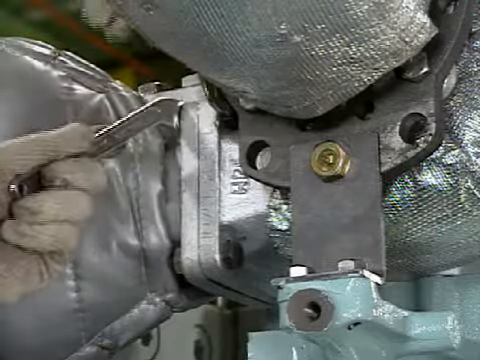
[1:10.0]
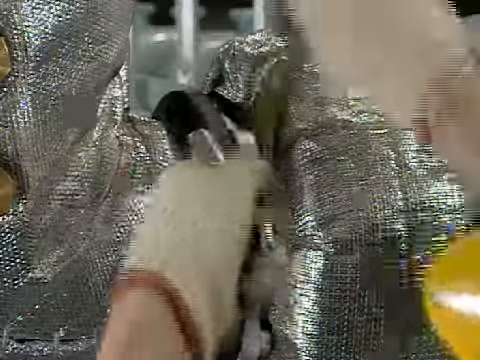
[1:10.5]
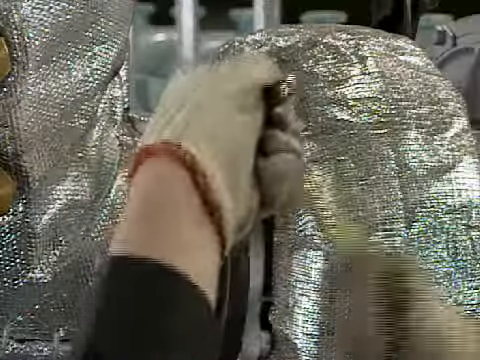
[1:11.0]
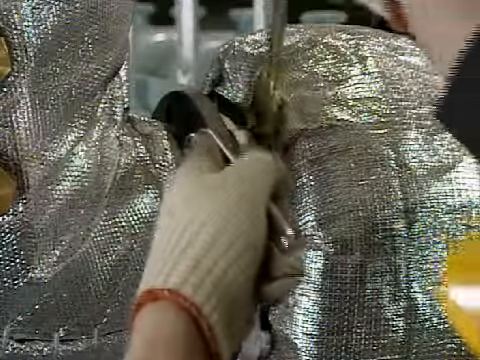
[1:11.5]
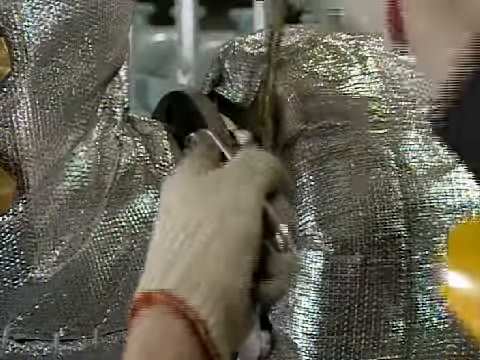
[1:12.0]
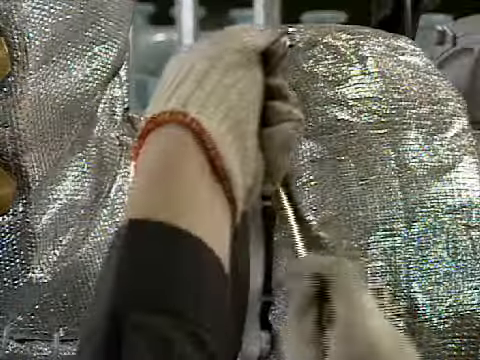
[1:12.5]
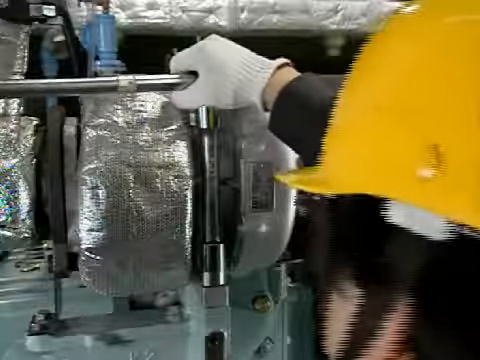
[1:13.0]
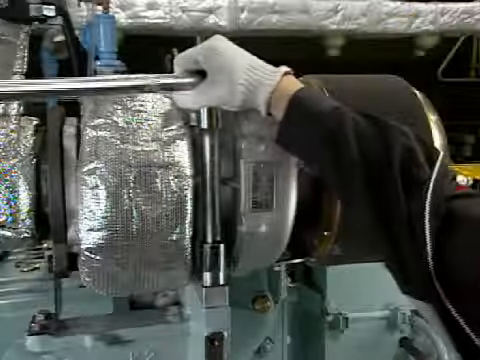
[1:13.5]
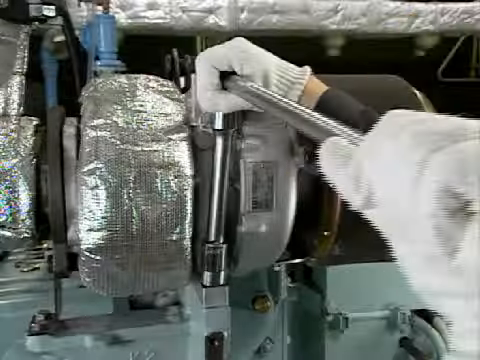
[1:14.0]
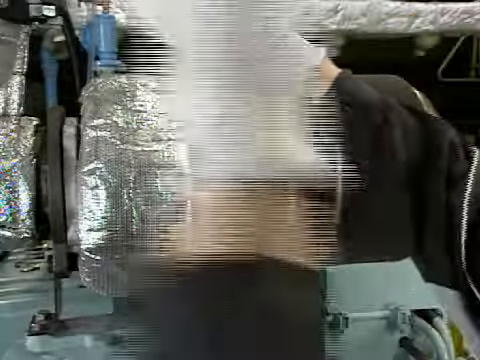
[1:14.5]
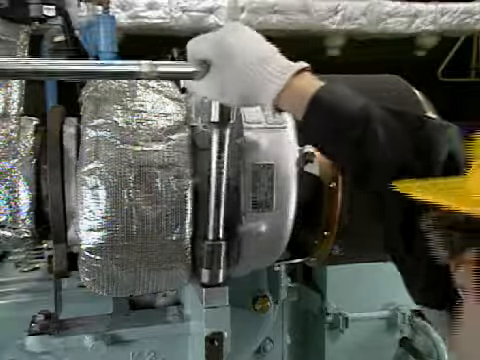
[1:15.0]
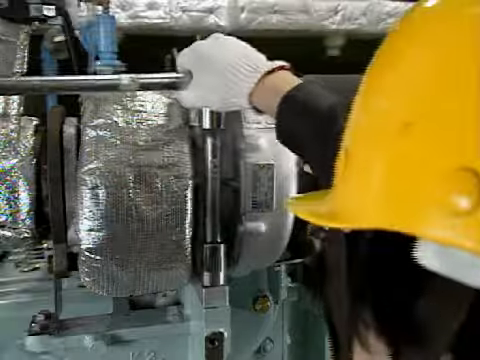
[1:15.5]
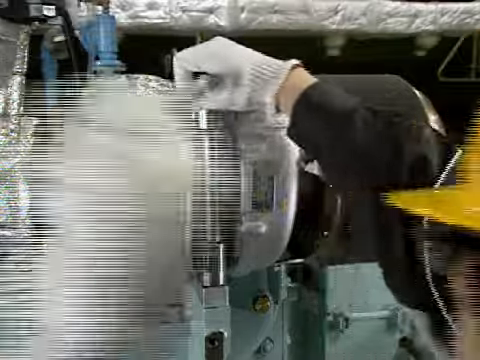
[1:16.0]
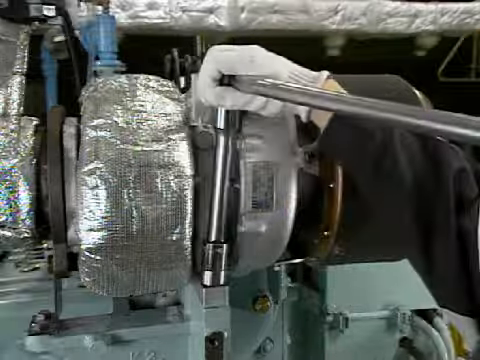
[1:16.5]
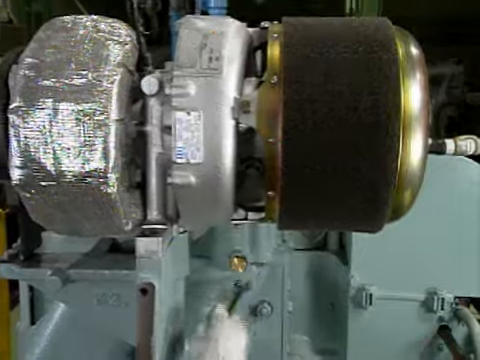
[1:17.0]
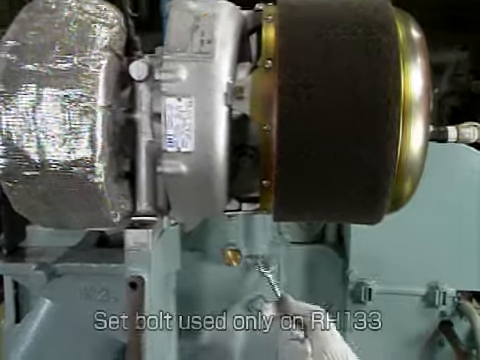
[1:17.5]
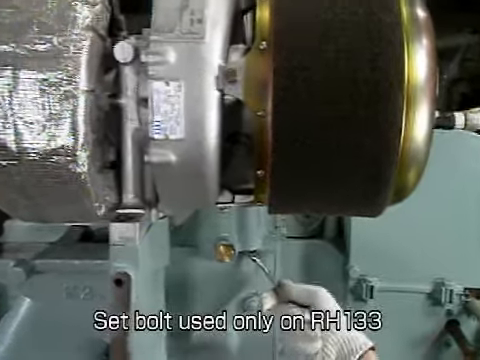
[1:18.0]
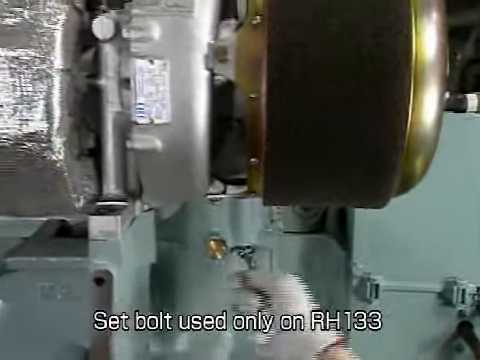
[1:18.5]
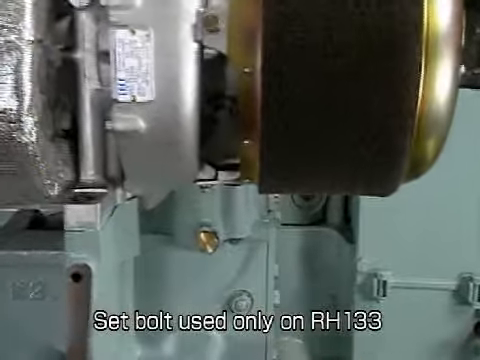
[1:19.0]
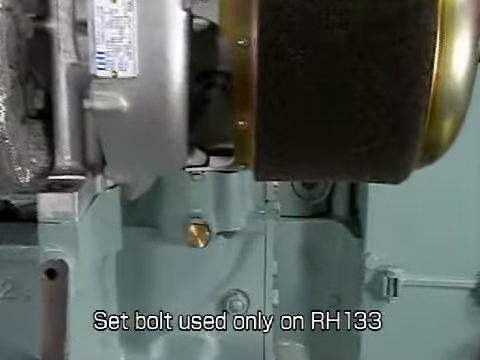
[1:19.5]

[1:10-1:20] The screws of the machine where its flexible joint is are tightened with both hands, since the screws are very large and need a lot of force. It is shown that the machine is used only with RH133.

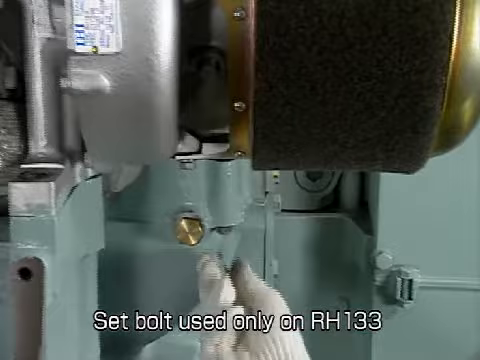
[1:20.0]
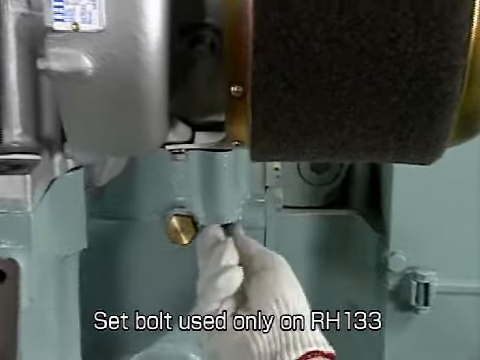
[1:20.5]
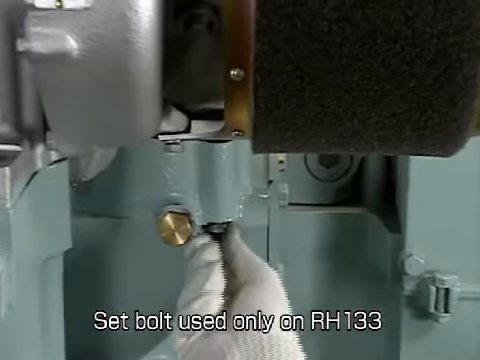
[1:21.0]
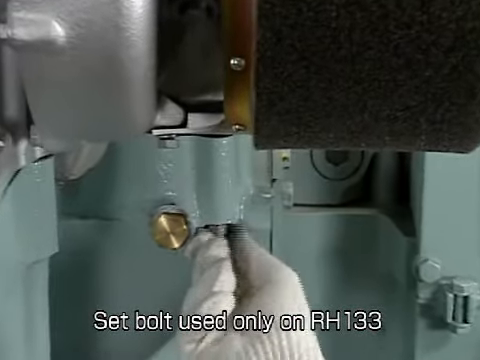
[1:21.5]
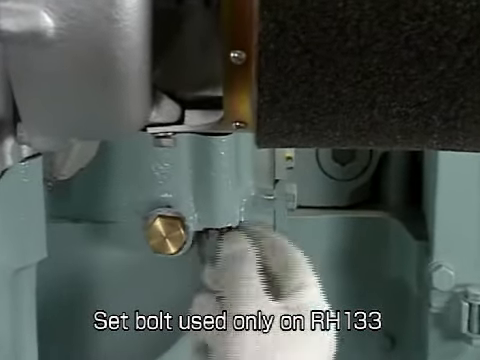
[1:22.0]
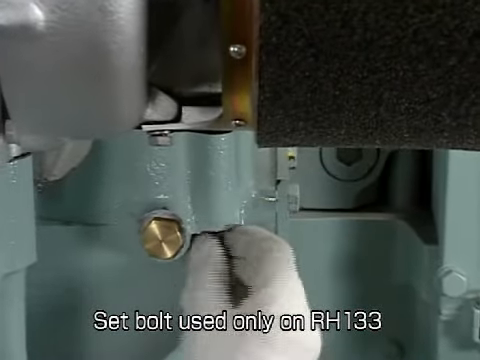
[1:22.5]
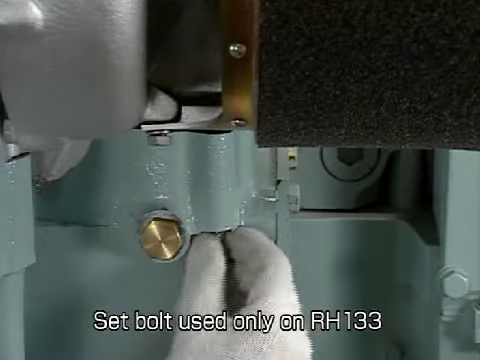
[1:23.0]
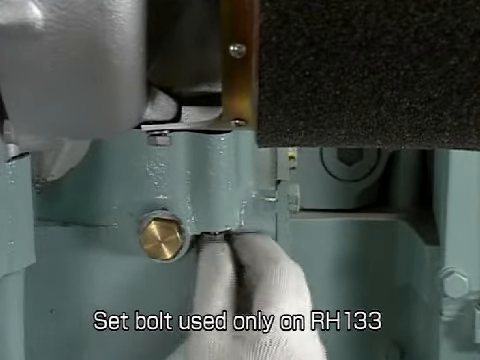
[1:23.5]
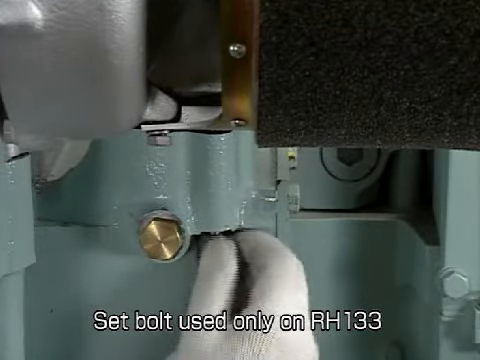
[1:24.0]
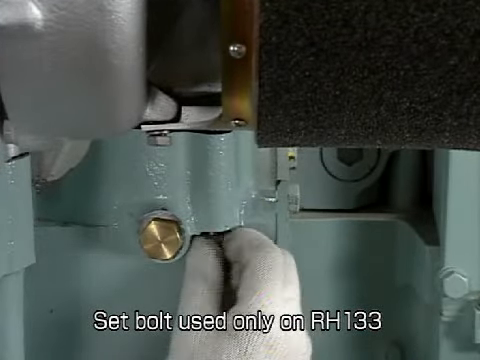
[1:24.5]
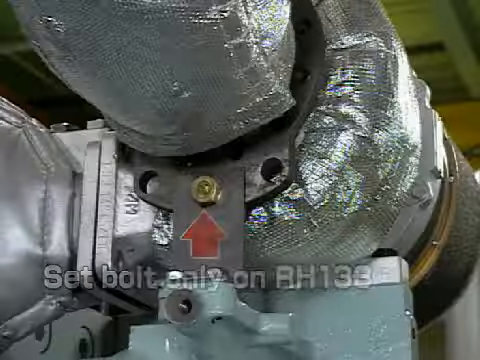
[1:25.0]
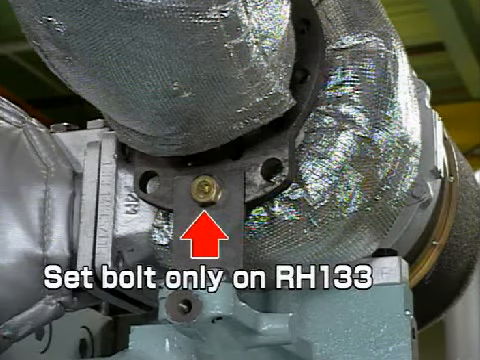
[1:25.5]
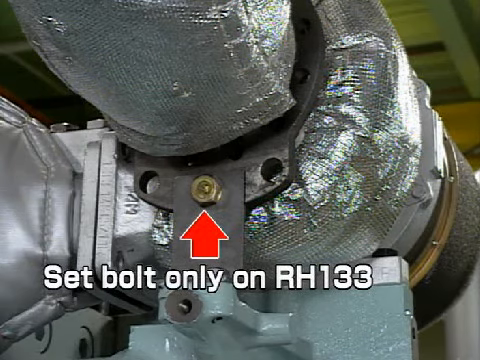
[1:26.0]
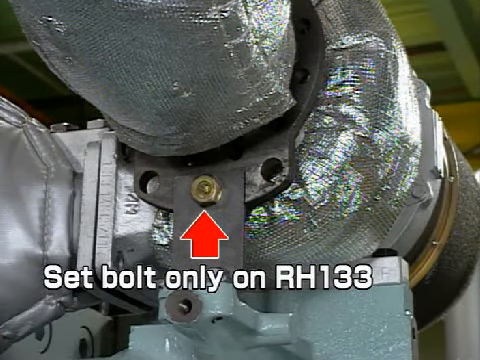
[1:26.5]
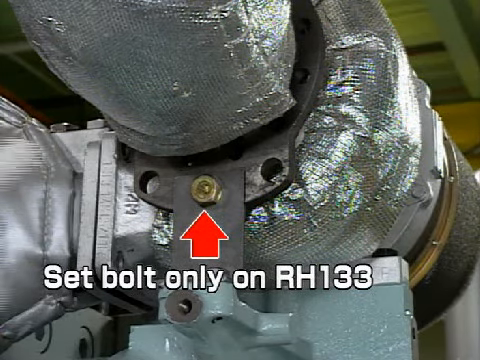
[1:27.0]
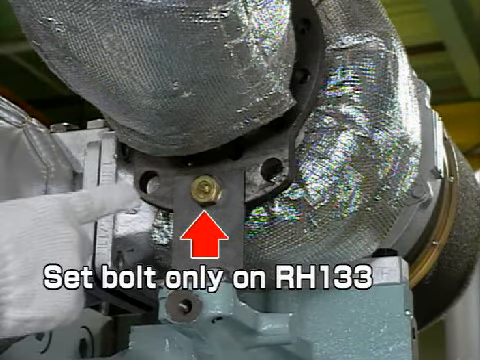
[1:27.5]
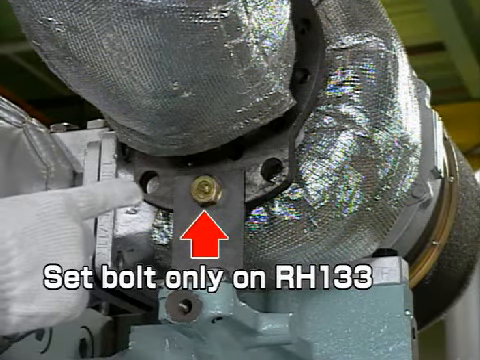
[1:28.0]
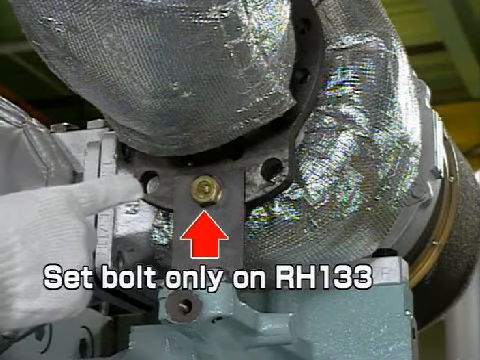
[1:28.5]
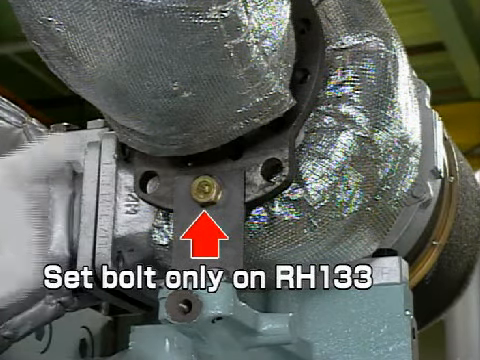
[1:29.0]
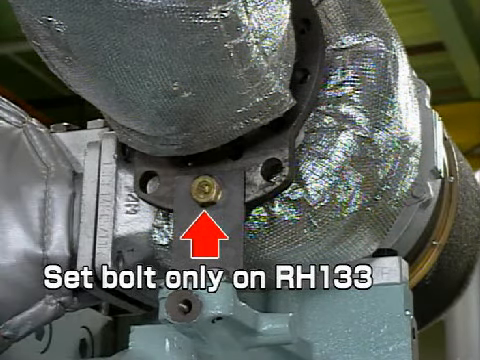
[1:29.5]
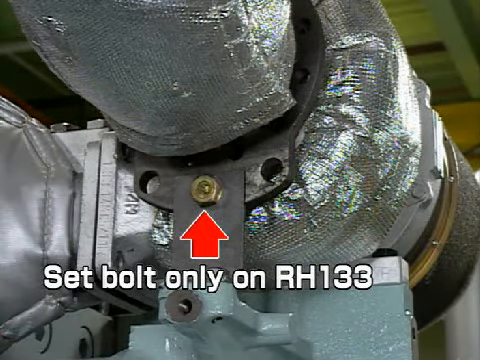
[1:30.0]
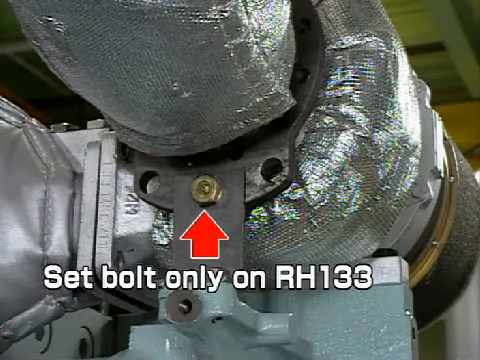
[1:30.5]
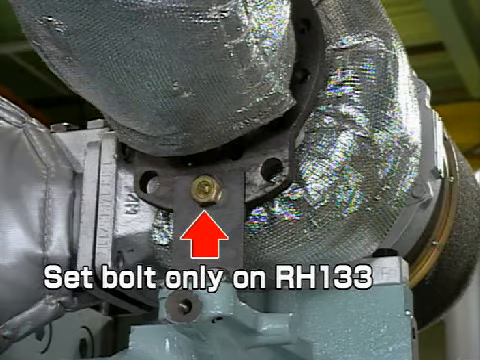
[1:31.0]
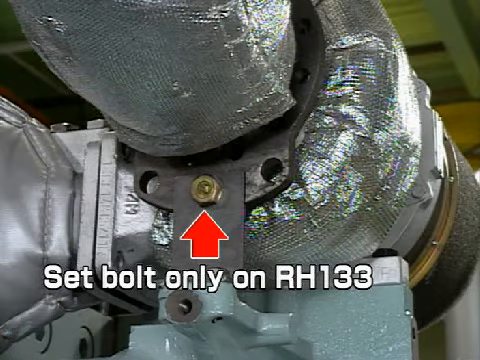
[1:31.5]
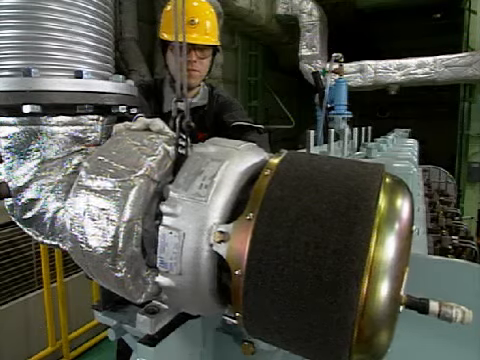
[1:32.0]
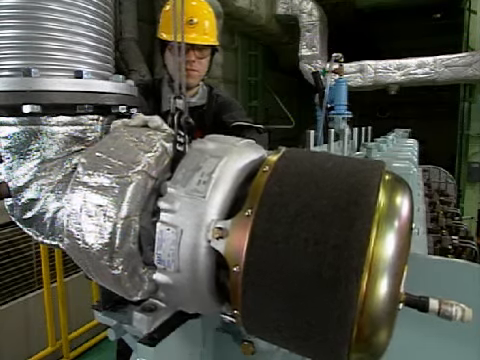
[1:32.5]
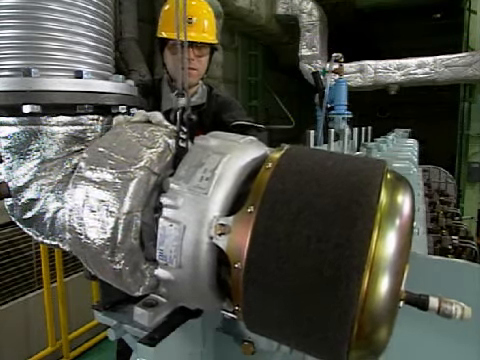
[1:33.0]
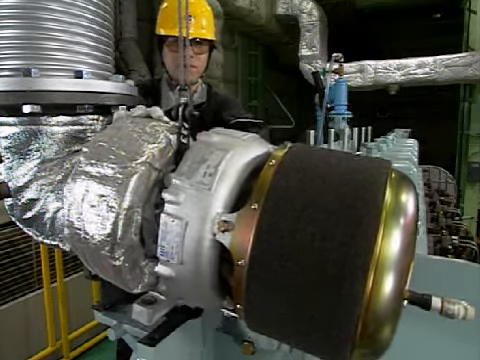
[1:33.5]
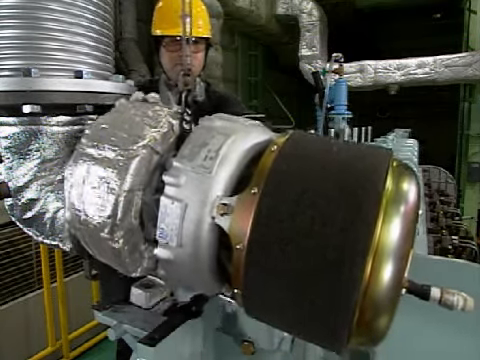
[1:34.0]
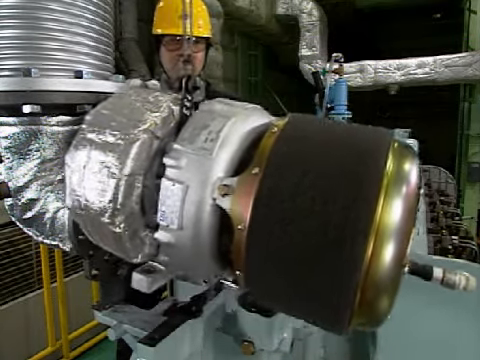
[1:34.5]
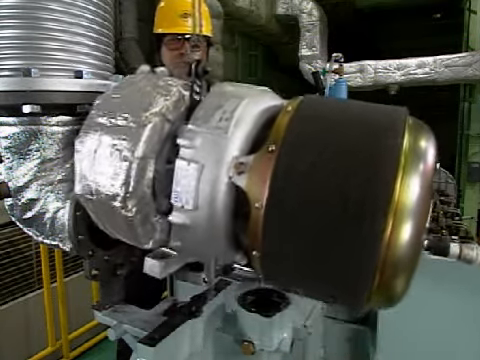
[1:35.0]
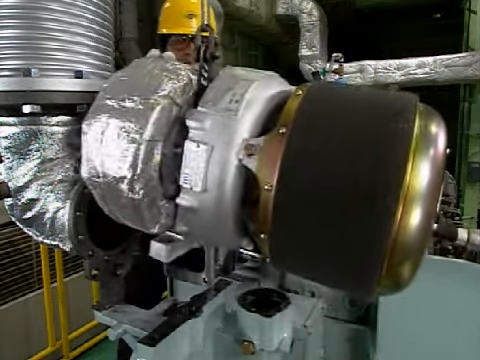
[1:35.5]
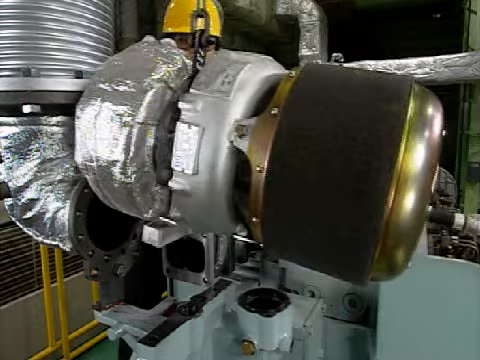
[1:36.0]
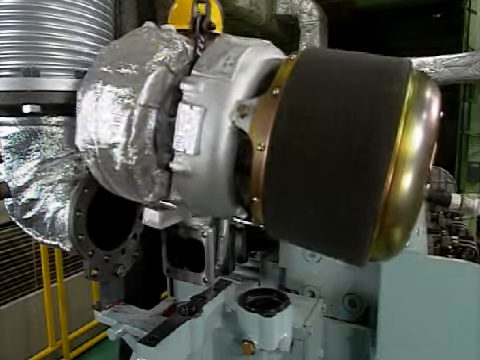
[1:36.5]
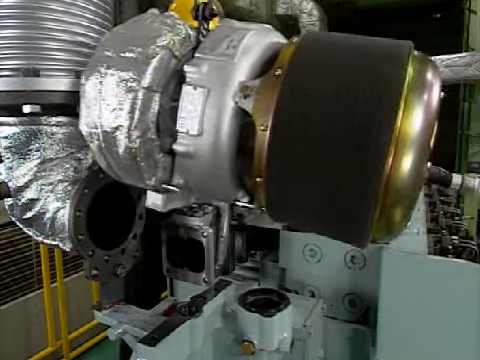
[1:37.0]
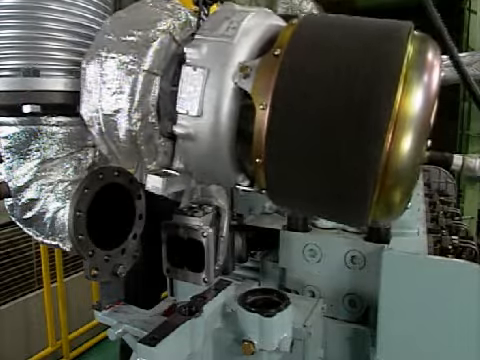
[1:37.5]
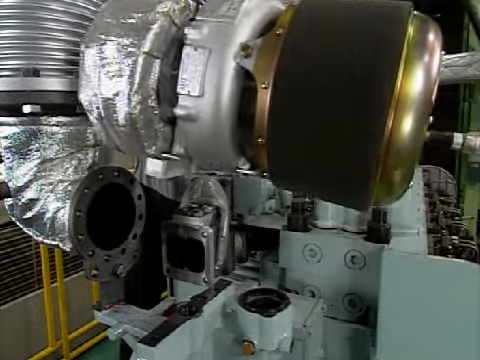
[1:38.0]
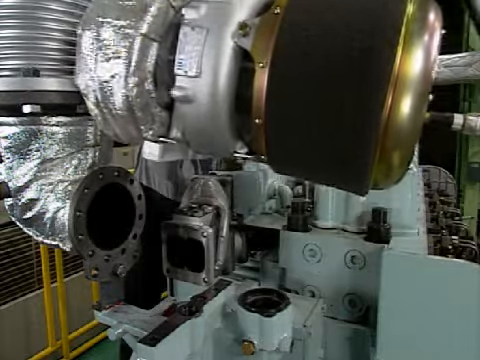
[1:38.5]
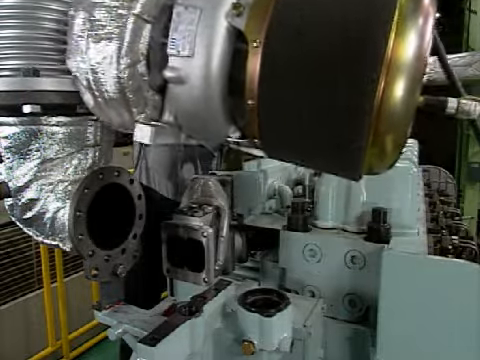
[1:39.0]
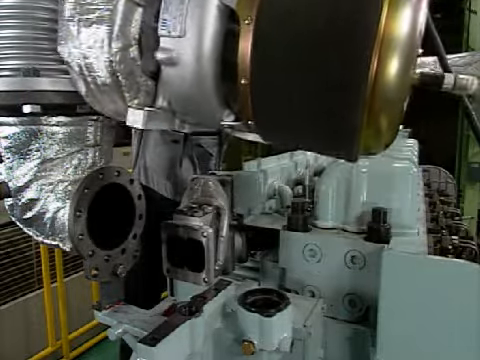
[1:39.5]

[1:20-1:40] The screws are unscrewed, and there is a specific explanation of where the RH-133 bolt is, the machine fitting, and how it is removed. When the bolt is removed at the bottom, the thread at the top is released, and a support is put in place to lift the machine. A worker wearing his safety equipment shows how this should be done.